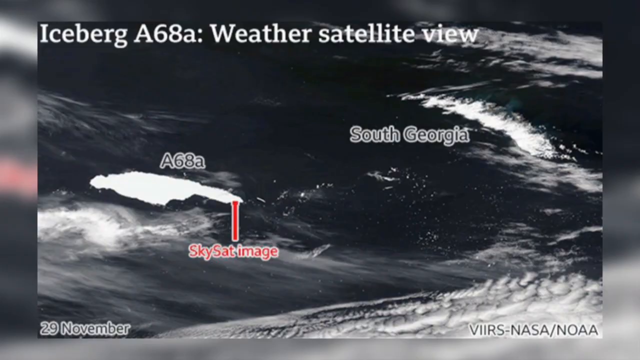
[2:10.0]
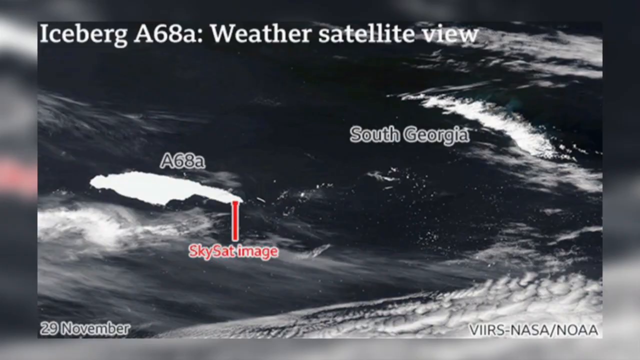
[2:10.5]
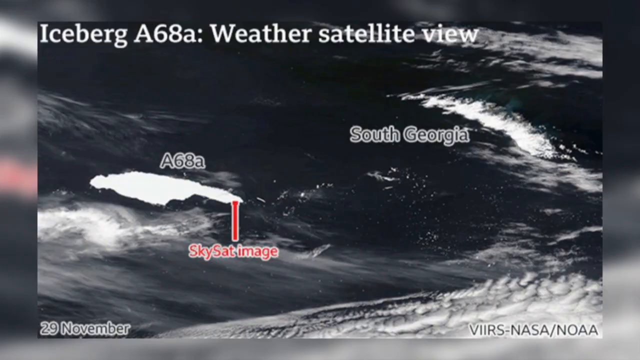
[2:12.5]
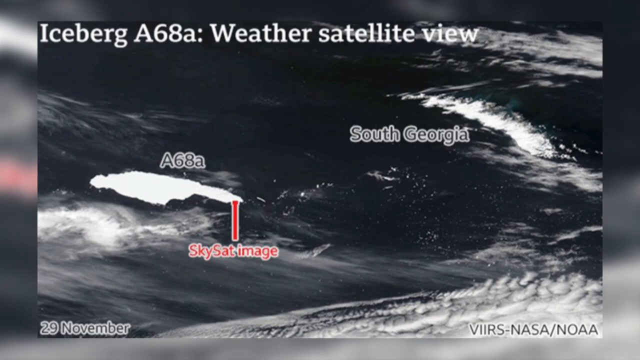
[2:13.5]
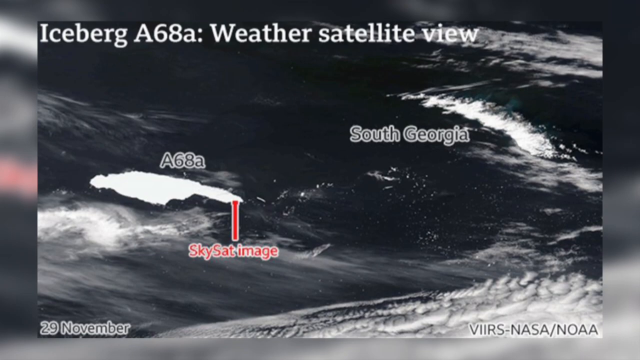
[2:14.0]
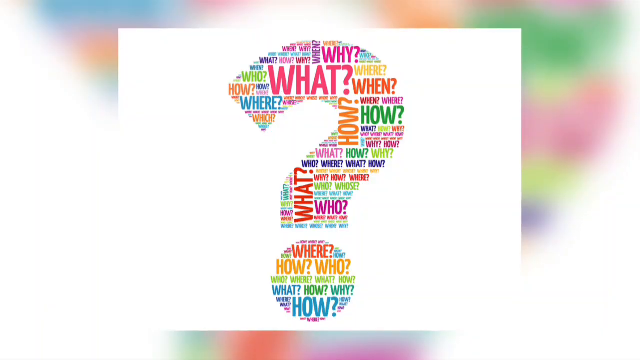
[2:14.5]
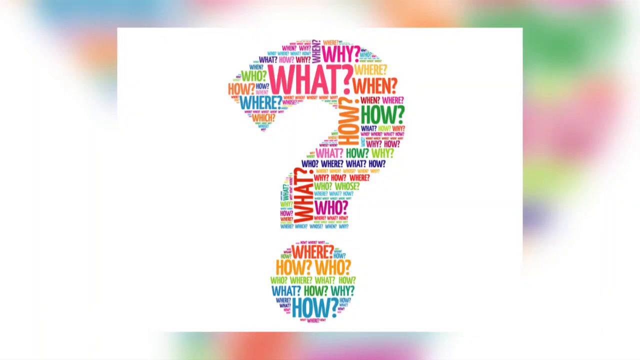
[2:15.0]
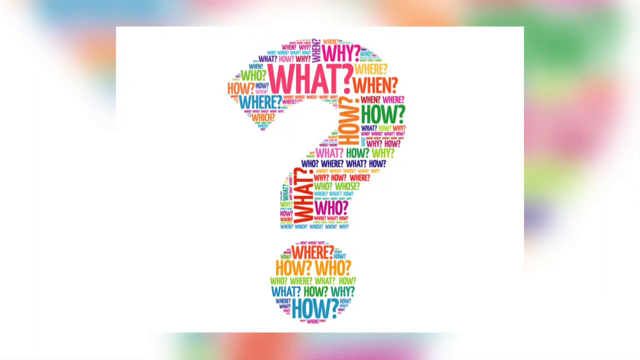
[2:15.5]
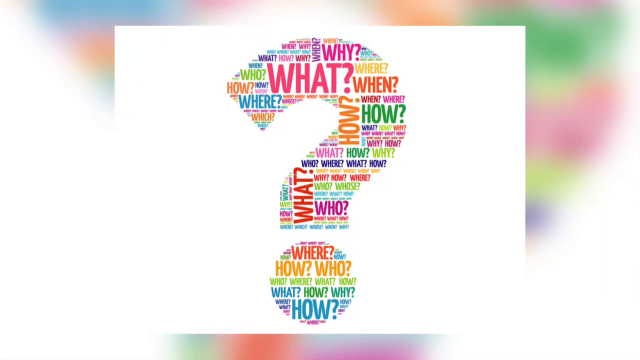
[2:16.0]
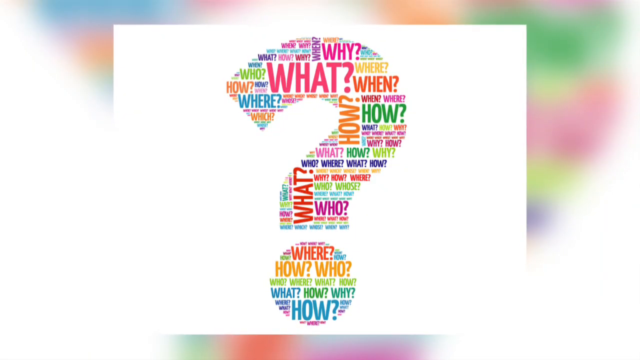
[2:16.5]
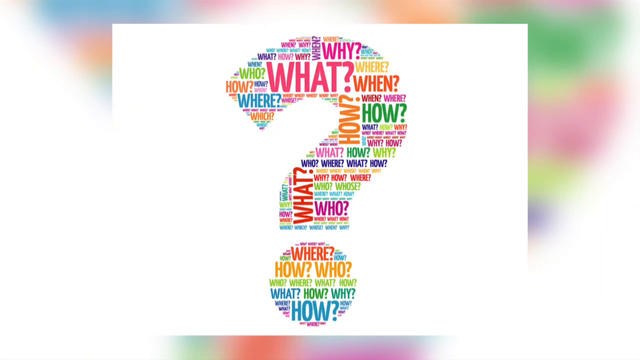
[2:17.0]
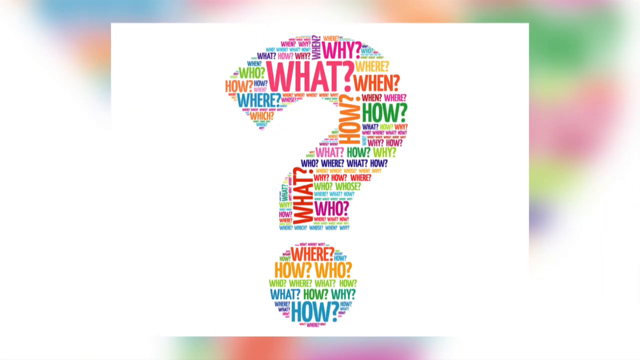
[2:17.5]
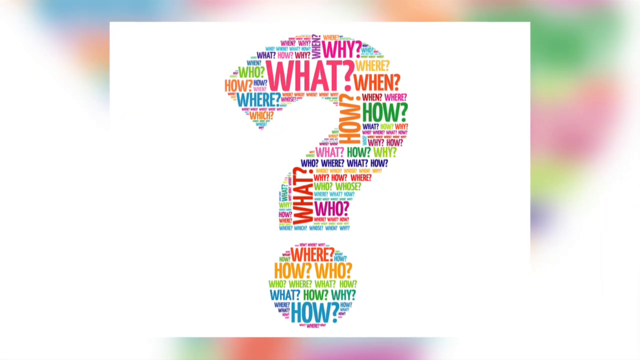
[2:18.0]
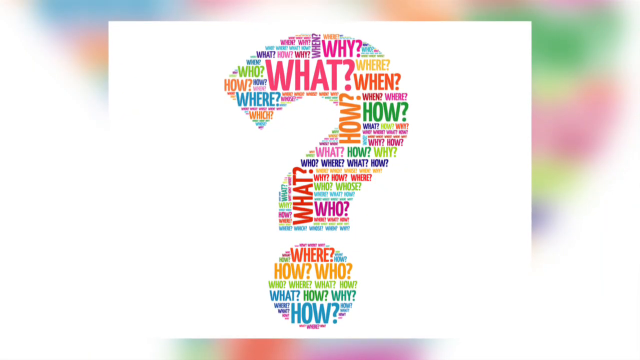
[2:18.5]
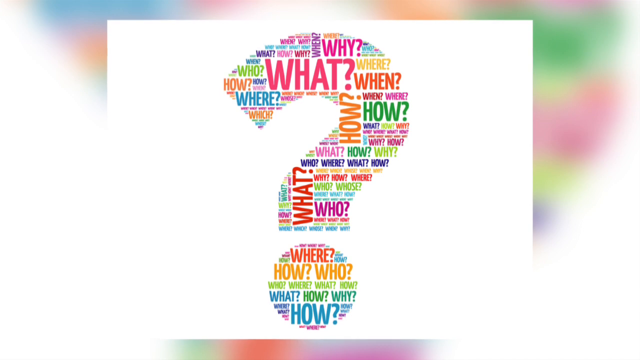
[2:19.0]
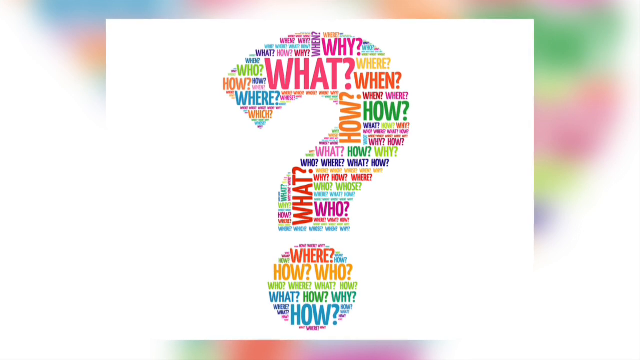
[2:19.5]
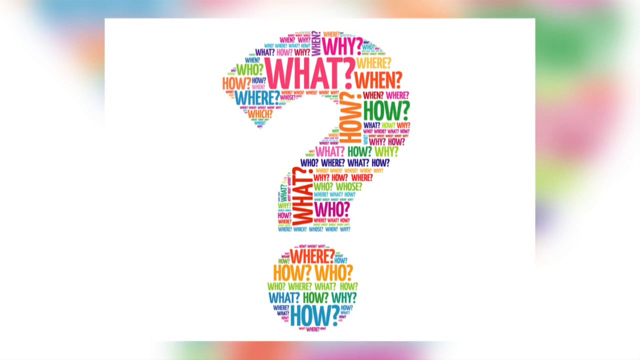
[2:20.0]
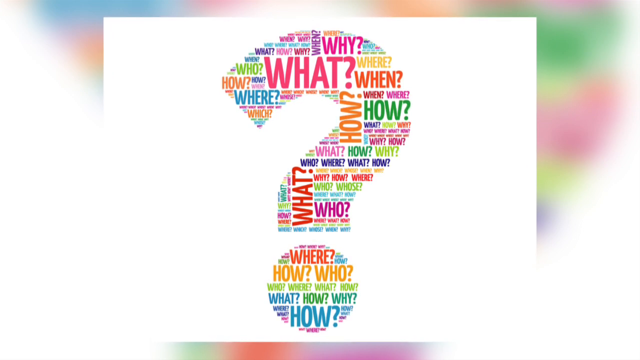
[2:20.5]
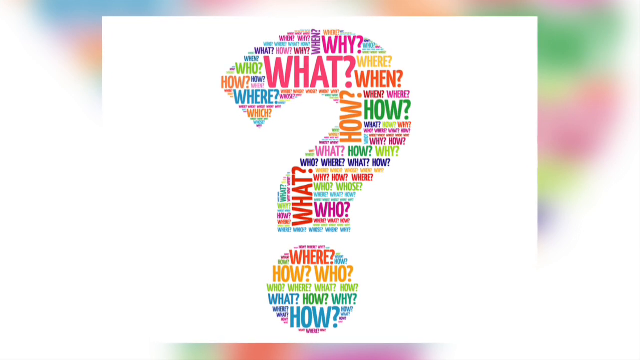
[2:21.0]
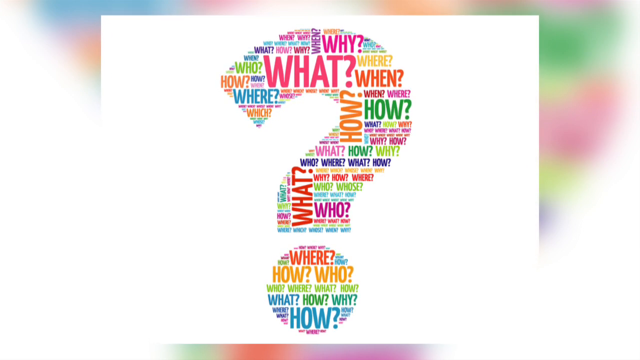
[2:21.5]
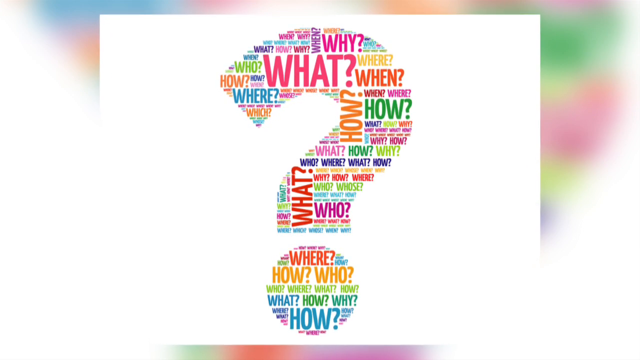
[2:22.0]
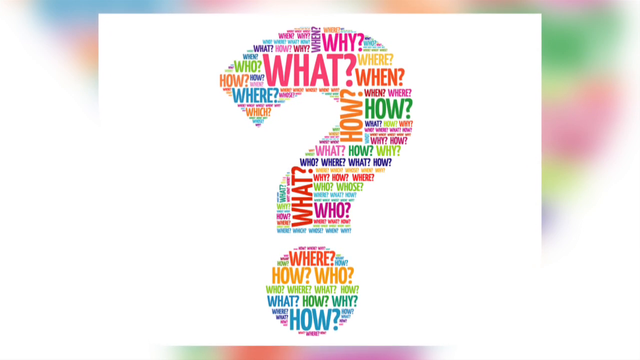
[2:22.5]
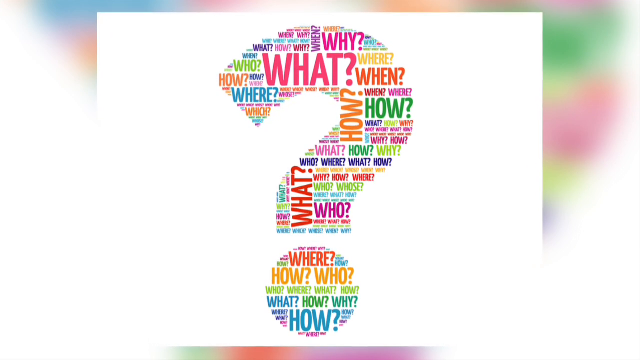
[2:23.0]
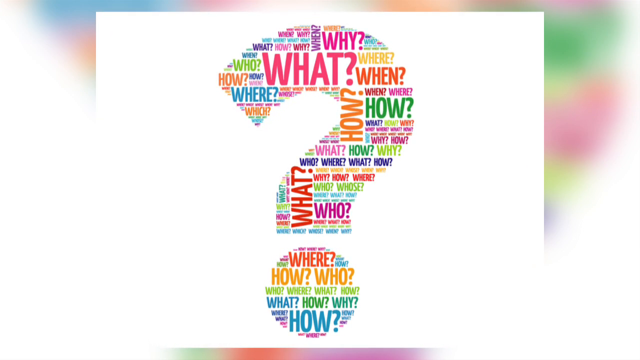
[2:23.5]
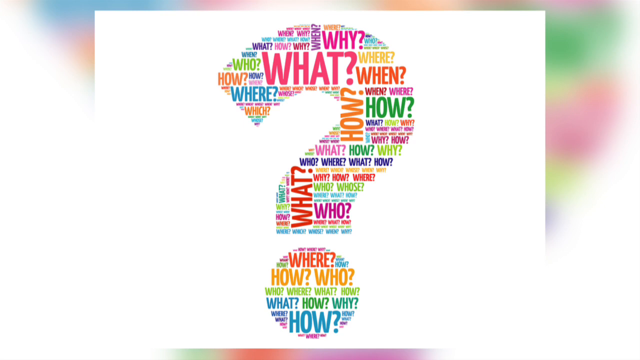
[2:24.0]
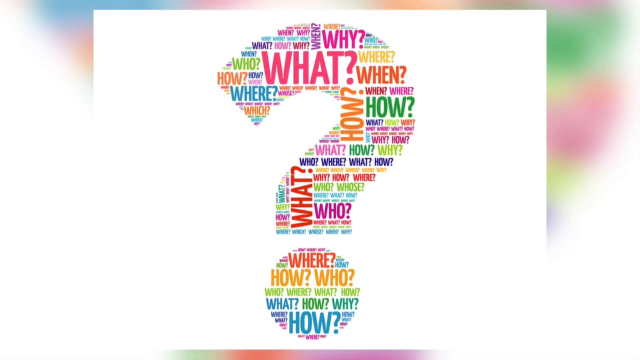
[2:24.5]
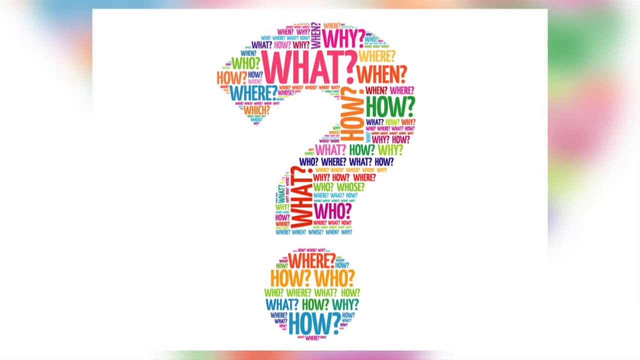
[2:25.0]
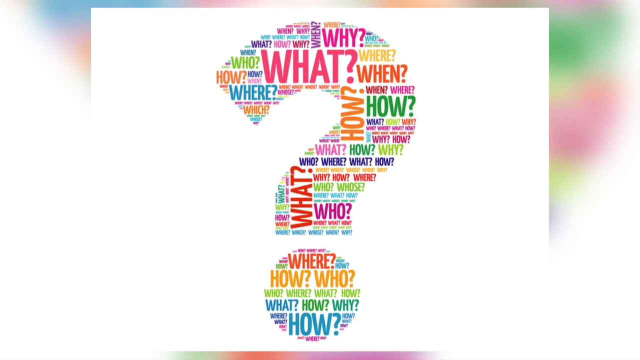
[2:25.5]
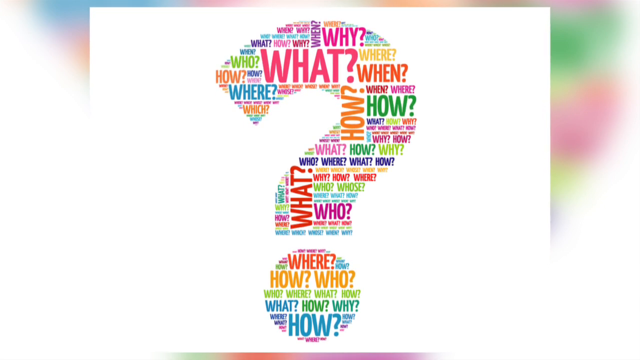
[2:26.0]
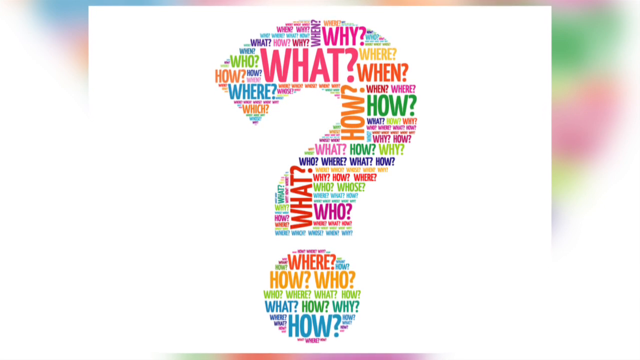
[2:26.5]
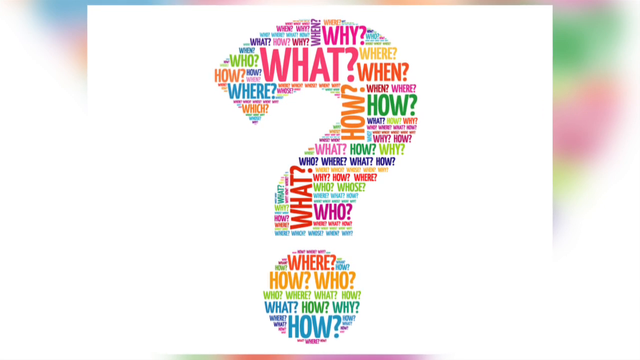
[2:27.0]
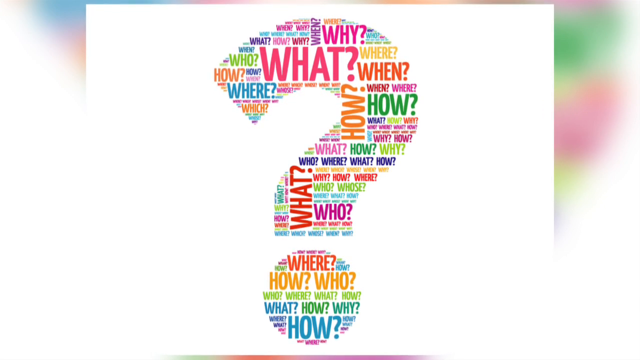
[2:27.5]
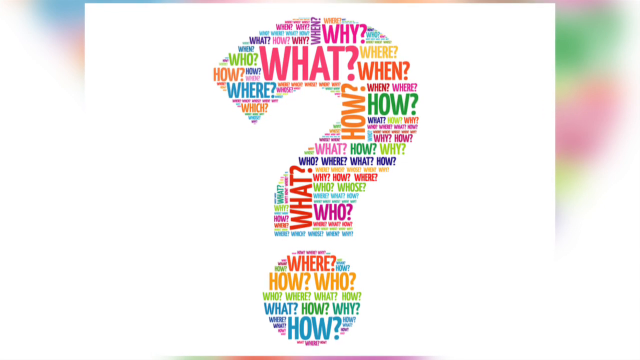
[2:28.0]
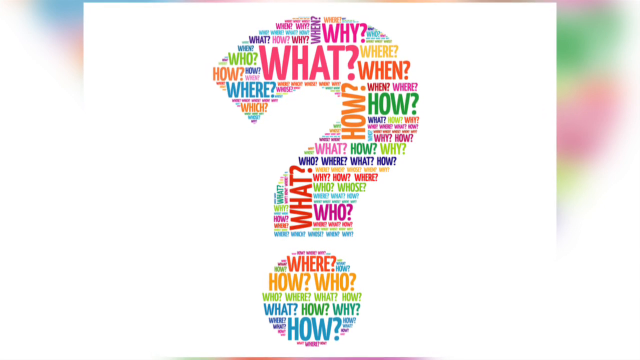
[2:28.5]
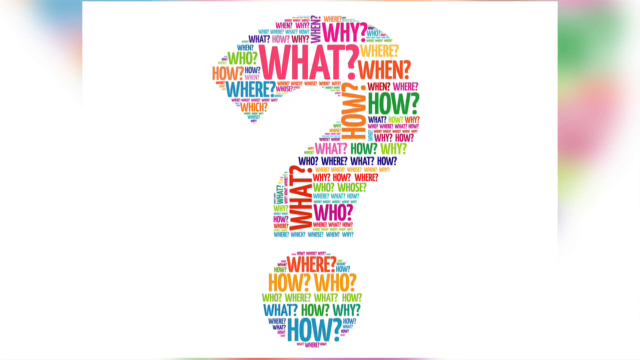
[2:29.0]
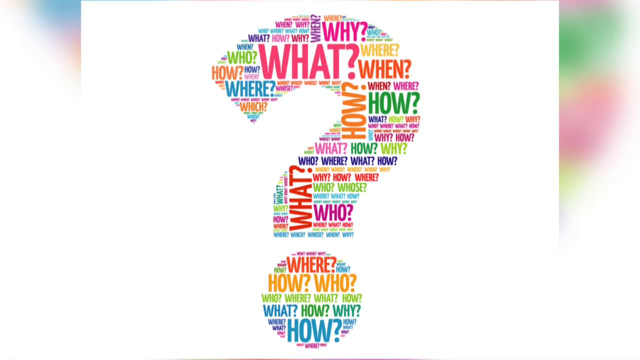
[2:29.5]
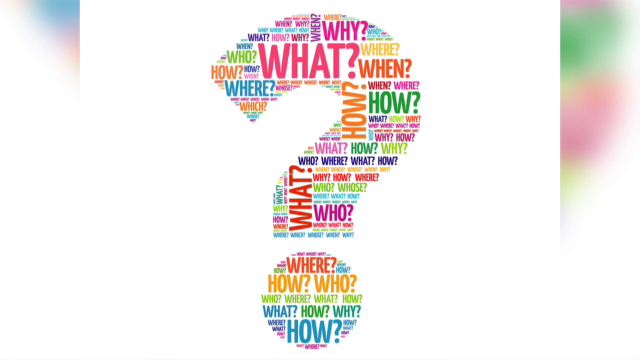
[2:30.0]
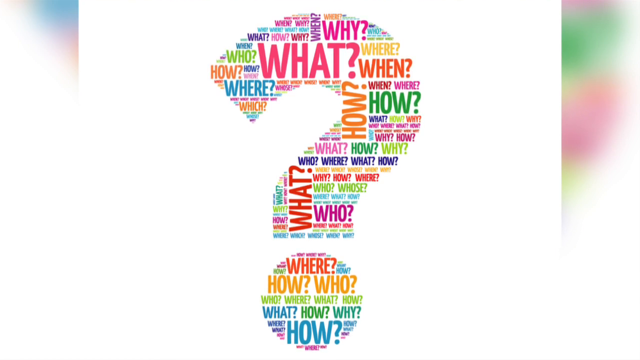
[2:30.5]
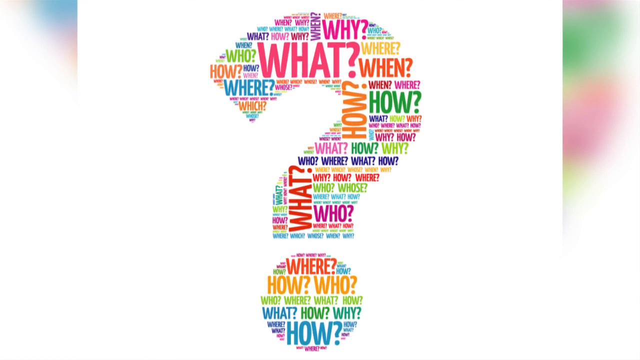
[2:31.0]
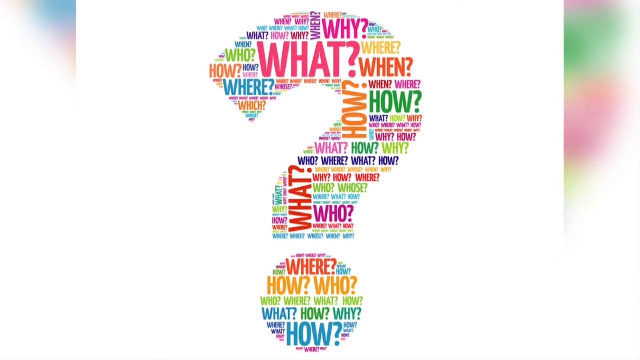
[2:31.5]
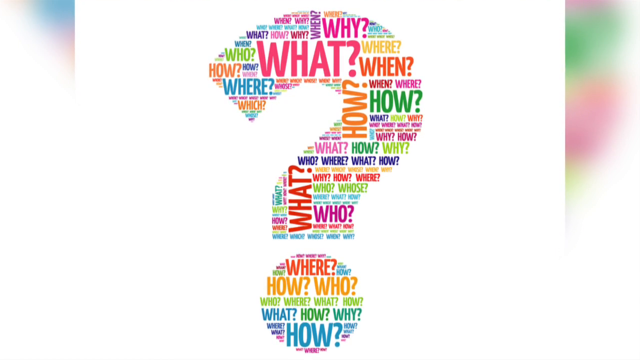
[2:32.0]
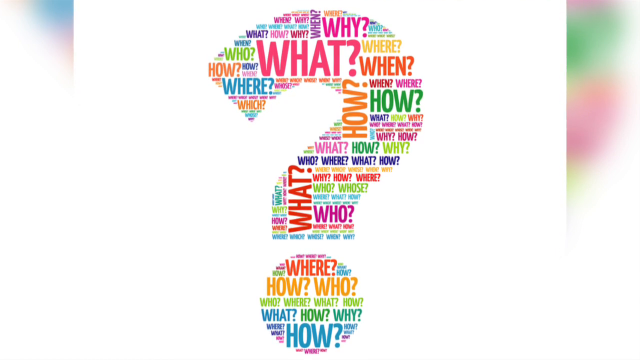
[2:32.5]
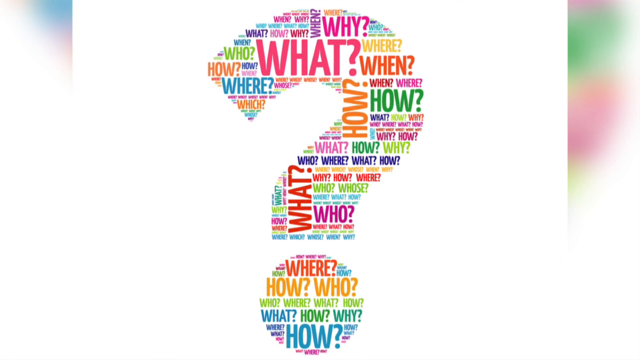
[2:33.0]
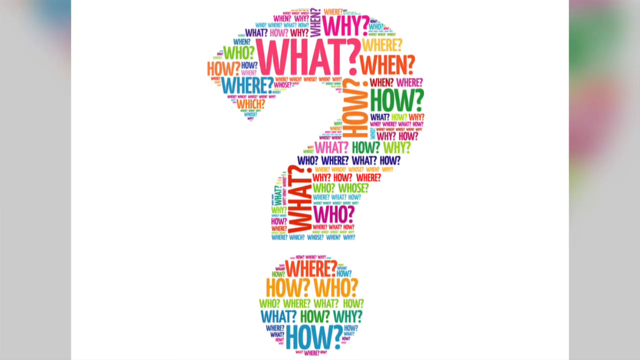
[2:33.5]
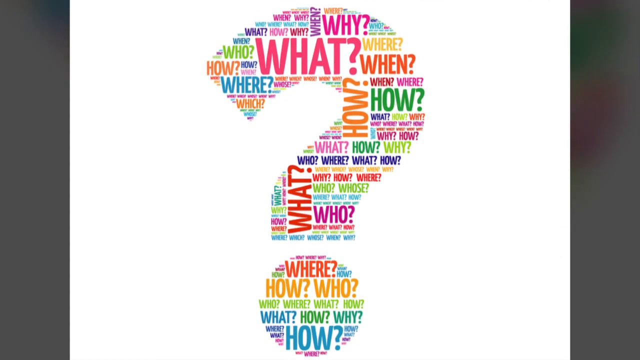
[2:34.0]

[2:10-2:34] An image shows a large question mark in the middle of a large white square. The question mark is made up of words in bright multiple colours, including red, green, orange, purple, pink and blue. The words "What?", "Why?" and "How?" are continually repeated to fill the entire question-mark shape. The camera moves in closer to the question mark in slow motion to show it in closer detail. The background slowly changes to black, contrasting with the white box the image is displayed within.